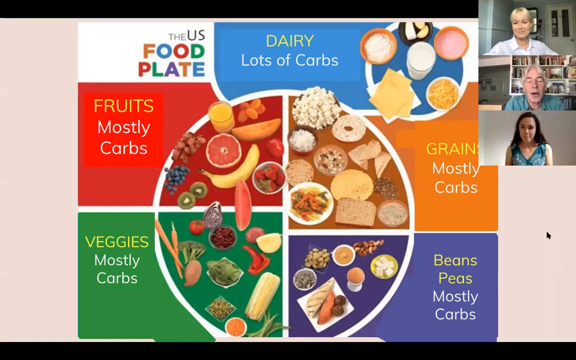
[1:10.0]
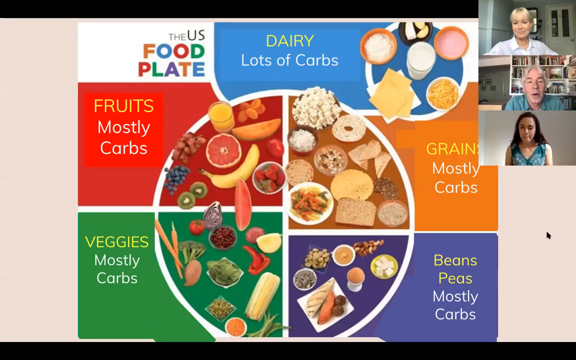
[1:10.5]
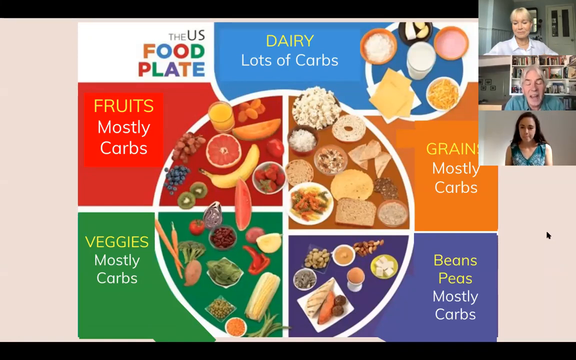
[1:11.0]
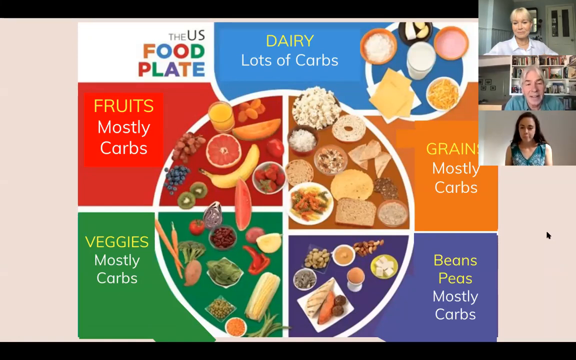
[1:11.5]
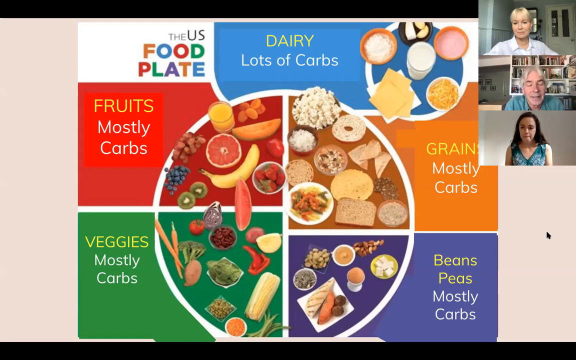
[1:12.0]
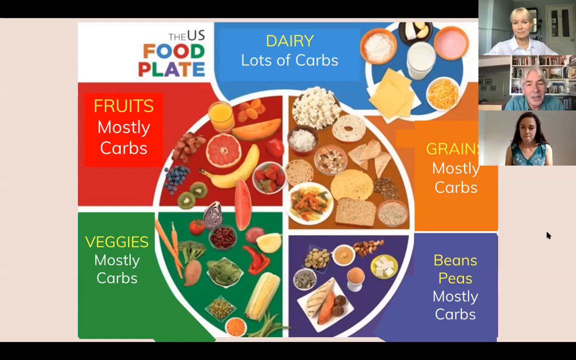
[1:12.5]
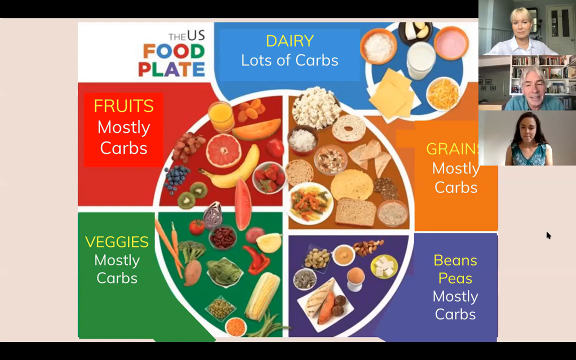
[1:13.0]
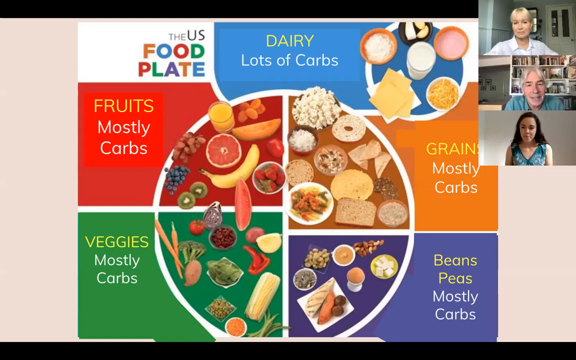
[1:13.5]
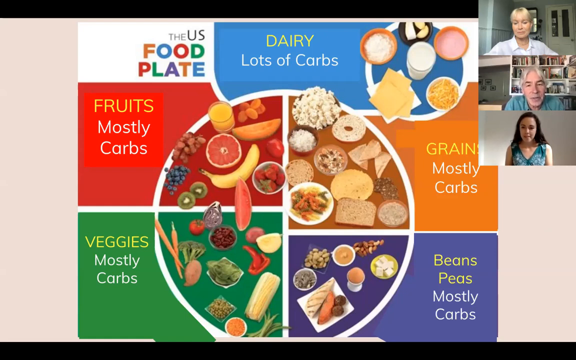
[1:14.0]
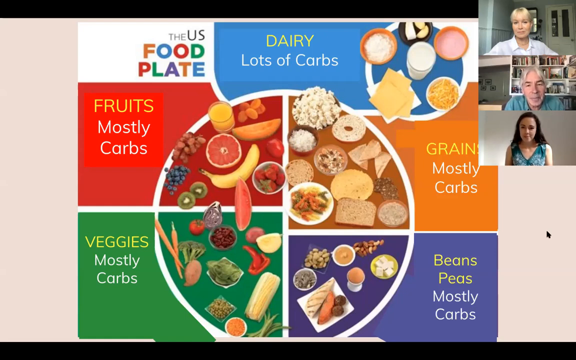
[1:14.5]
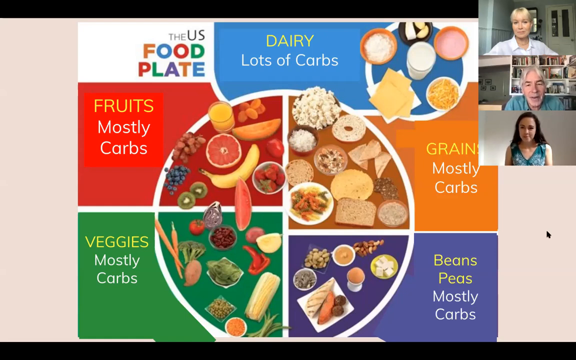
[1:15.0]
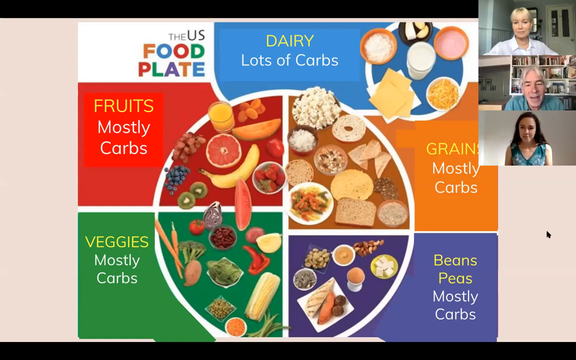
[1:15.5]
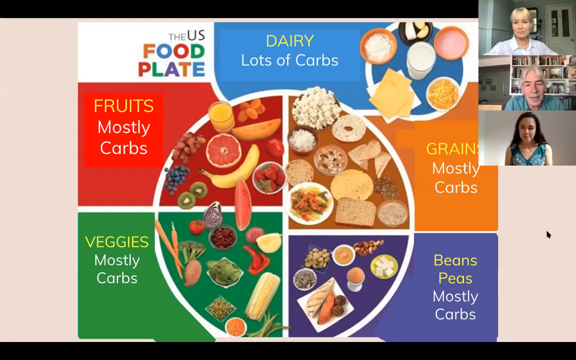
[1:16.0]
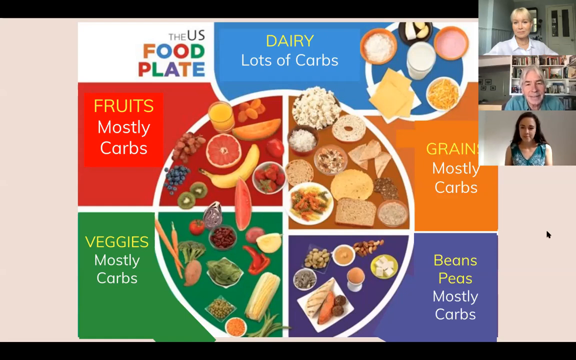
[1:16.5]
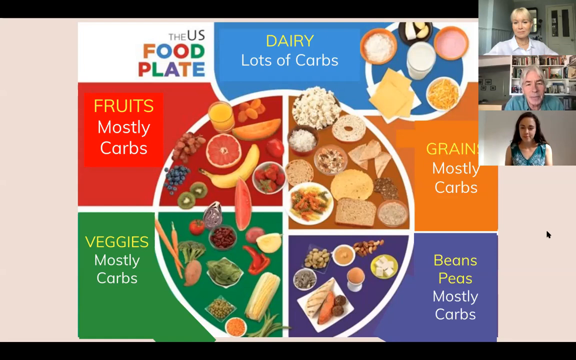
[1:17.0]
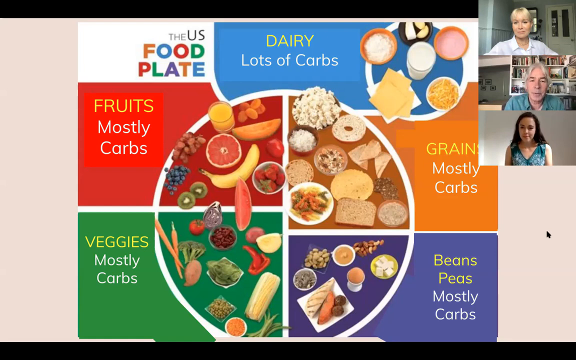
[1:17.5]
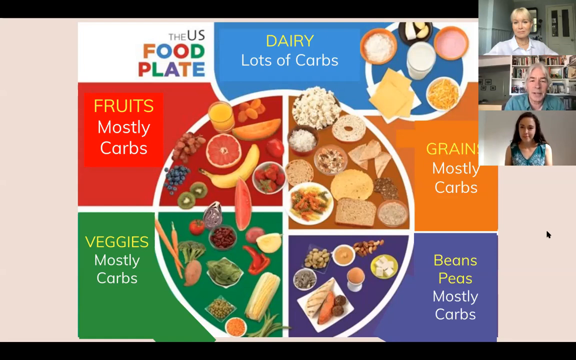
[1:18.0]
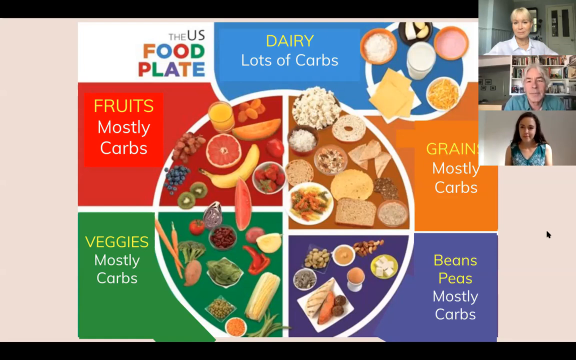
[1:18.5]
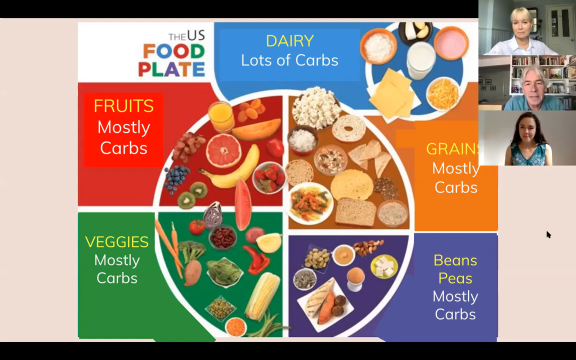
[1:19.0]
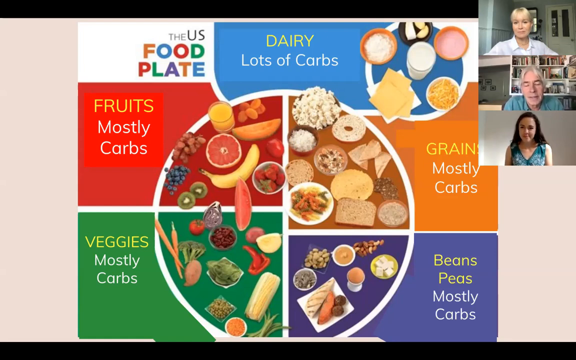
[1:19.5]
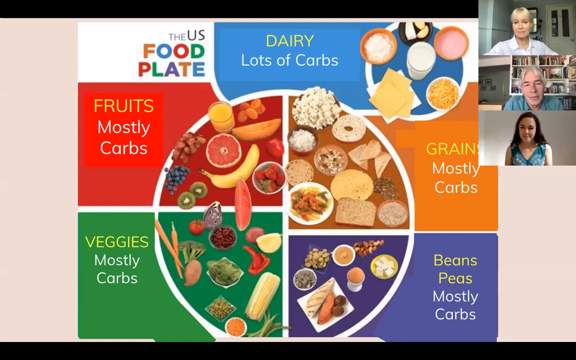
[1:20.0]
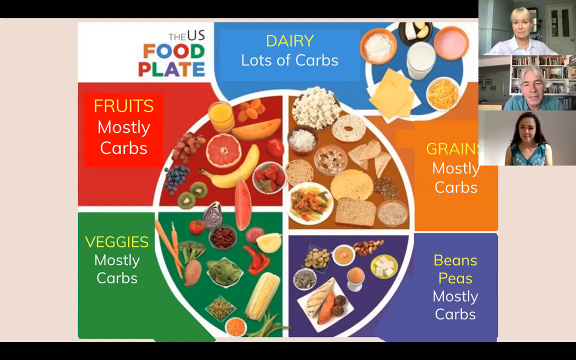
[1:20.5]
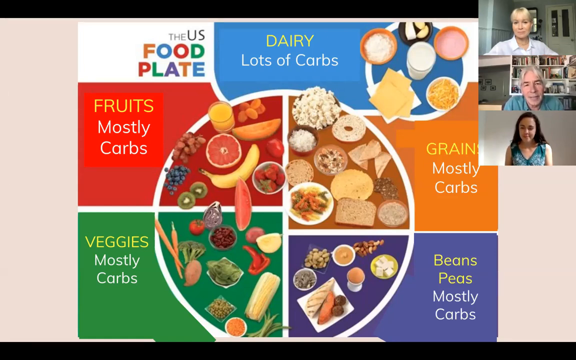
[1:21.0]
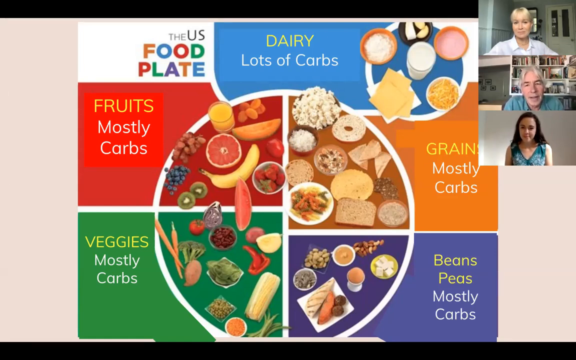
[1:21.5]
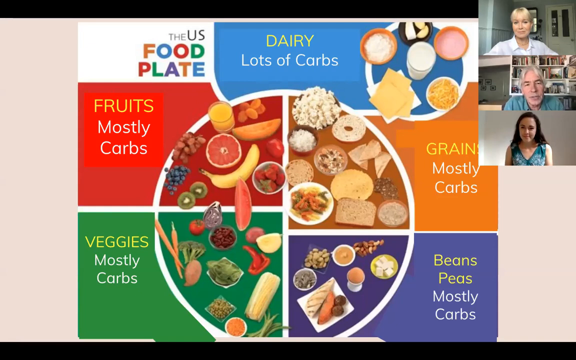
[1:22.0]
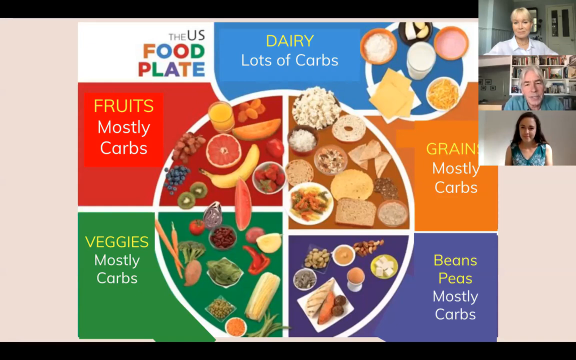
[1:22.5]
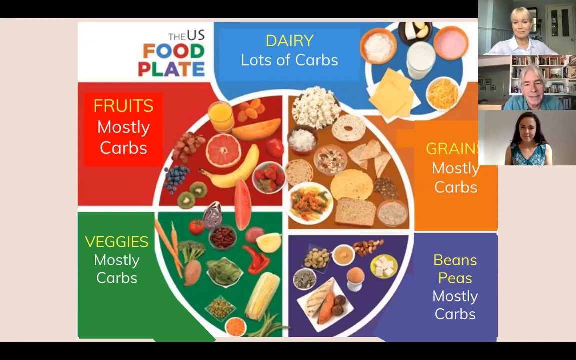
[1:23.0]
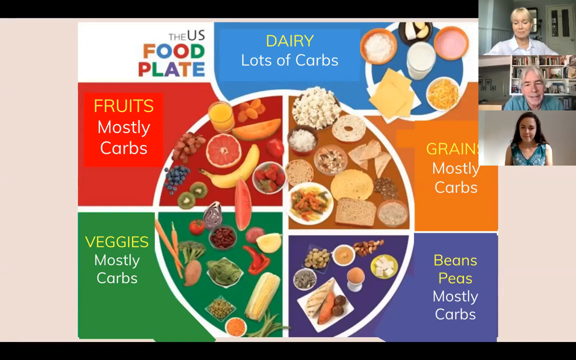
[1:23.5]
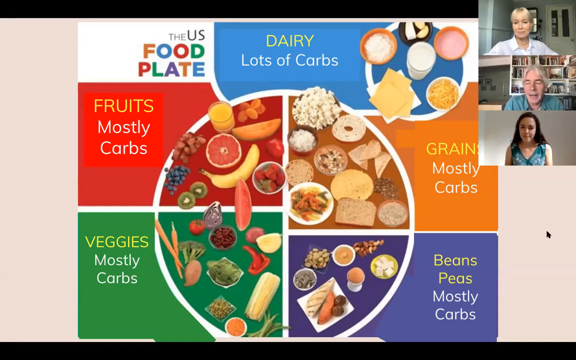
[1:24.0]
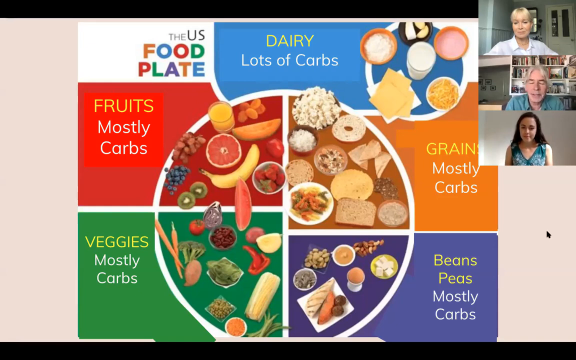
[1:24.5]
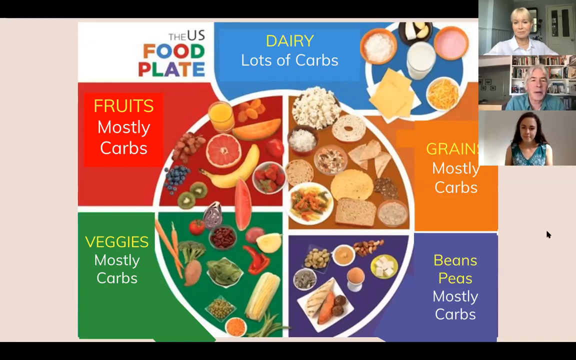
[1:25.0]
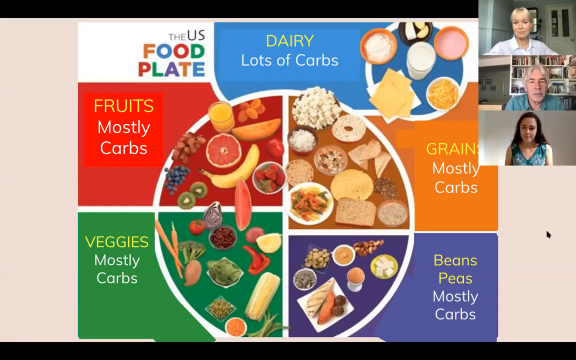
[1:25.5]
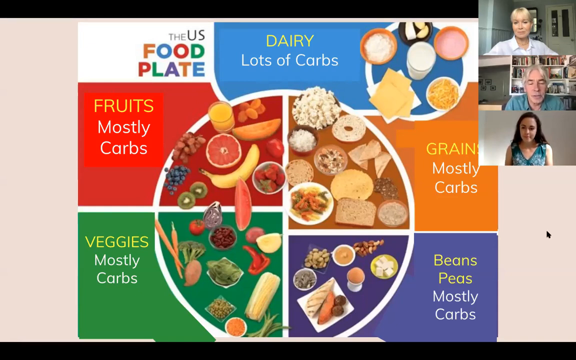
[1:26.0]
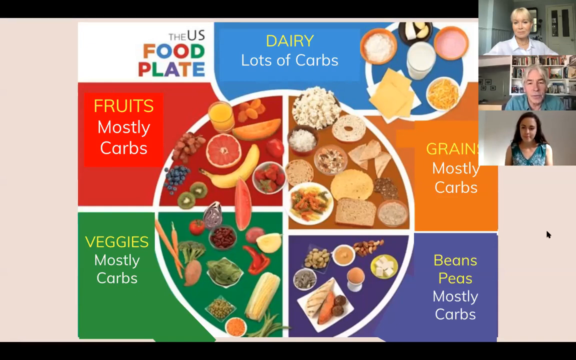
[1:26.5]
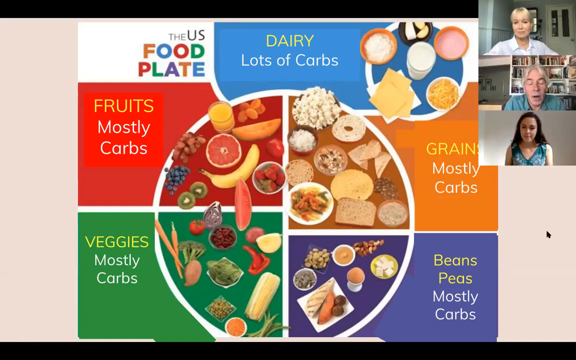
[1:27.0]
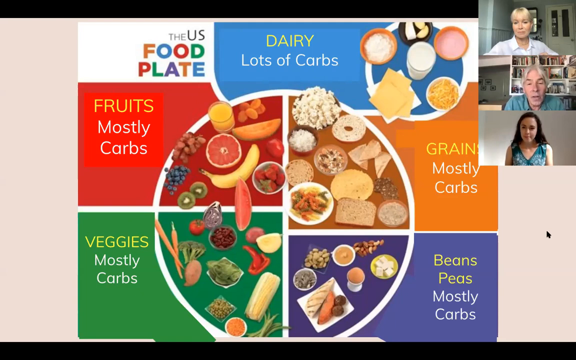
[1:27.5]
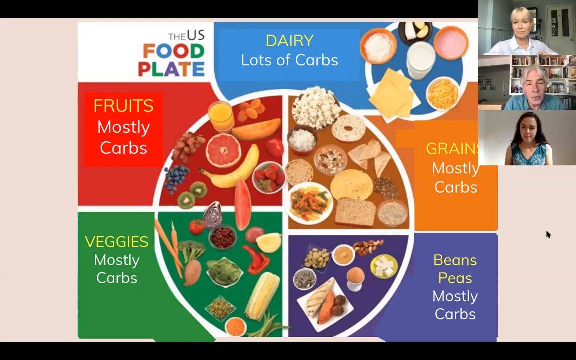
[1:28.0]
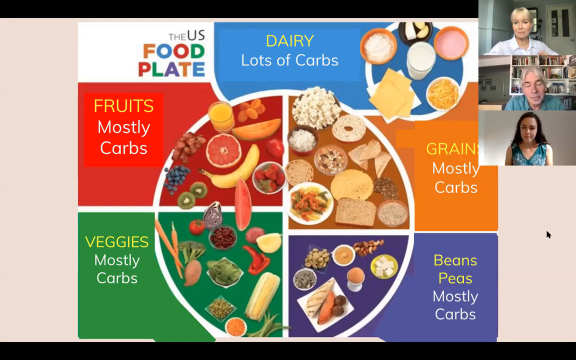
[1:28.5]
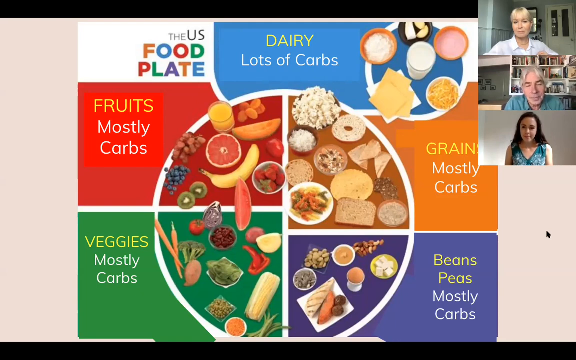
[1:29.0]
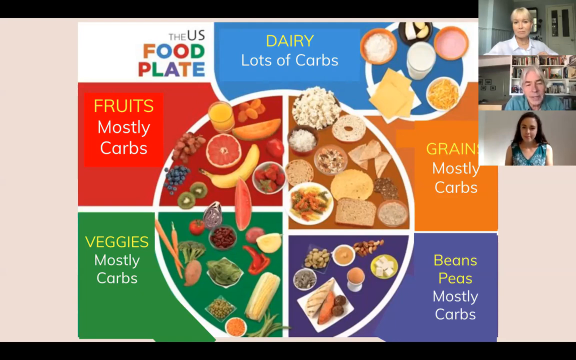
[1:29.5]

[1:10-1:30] A chart or poster takes up the majority of the frame in the center of the screen. At its top left corner it says "U.S. food plate," and to the right of that "dairy, lots of carbs," followed by a white circle with dairy foods such as milk and cheese. Below the title is a red triangle that seems to connect to the red segment of a white circle in the center of the chart, like a pie chart cut into four segments. The red segment has fruits such as strawberries, bananas, grapefruit, orange, grapes, watermelon, and others. The veggie section shows tomato, carrot, corn, and other veggies. To the right of that is a purple segment showing nuts and meats, and above that an orange or brown segment shows grains such as bagels, breads, corn tortilla, and popcorn. In the very top right corner of the screen, three Caucasian individuals appear in three separate rectangular windows. At the top is a Caucasian female with blonde hair and a white shirt. Below her is a Caucasian male with gray hair and a green shirt, who is speaking. Below him is a Caucasian female with dark brown or black hair wearing a sleeveless green and white shirt.